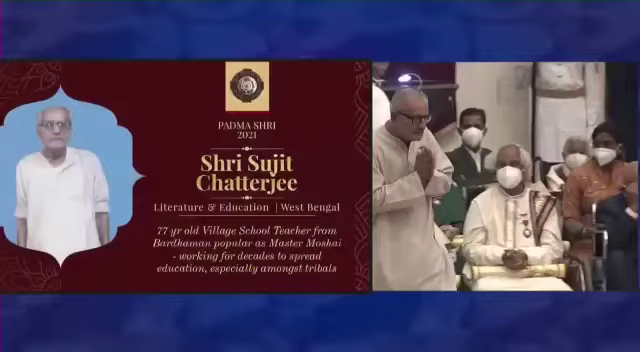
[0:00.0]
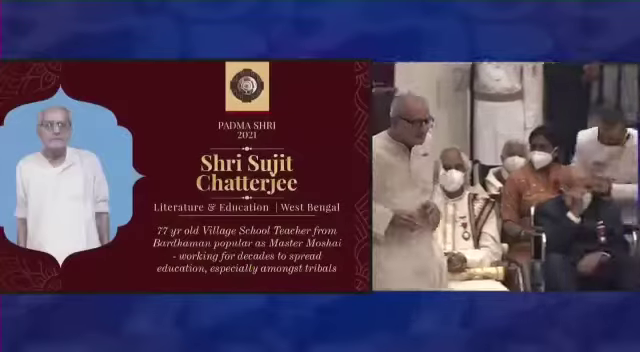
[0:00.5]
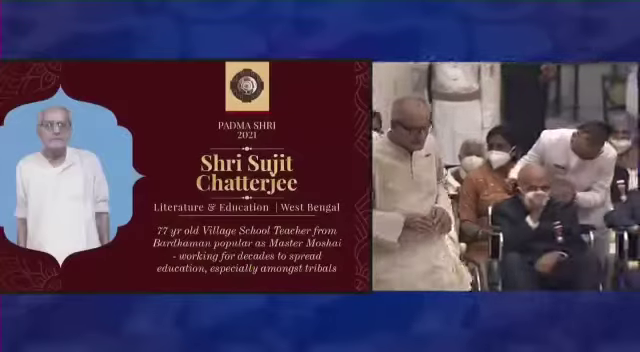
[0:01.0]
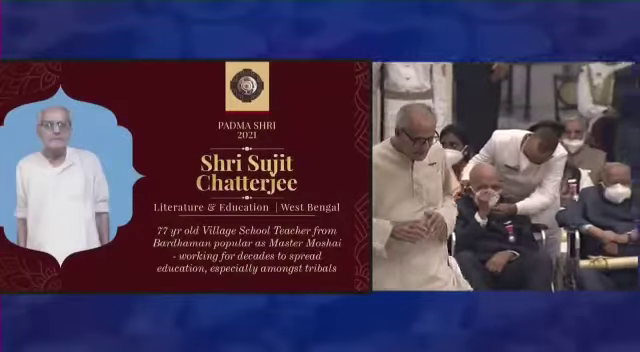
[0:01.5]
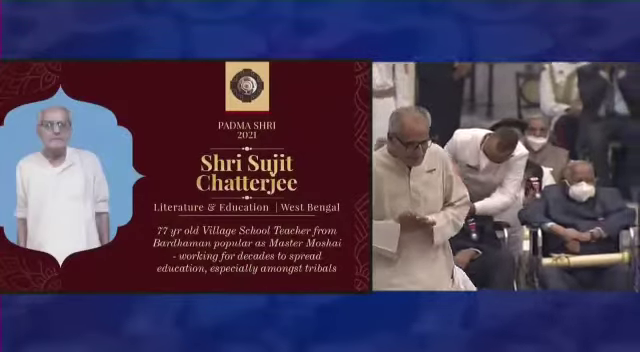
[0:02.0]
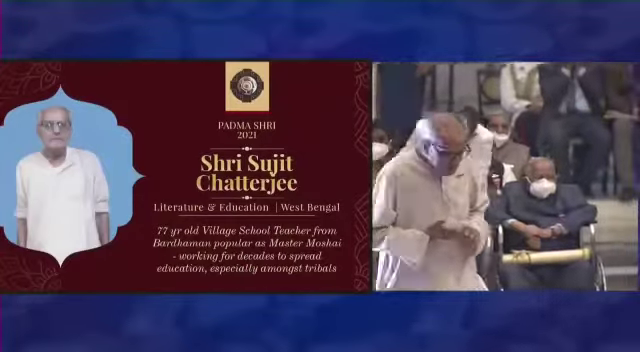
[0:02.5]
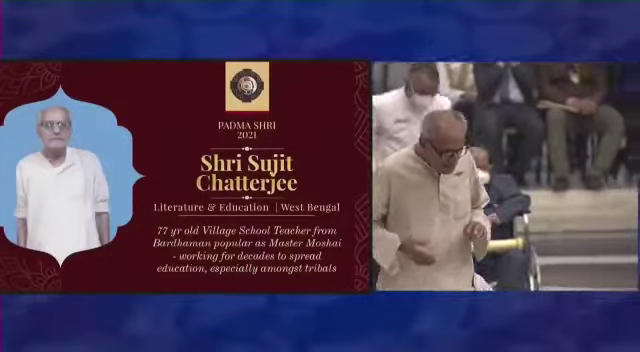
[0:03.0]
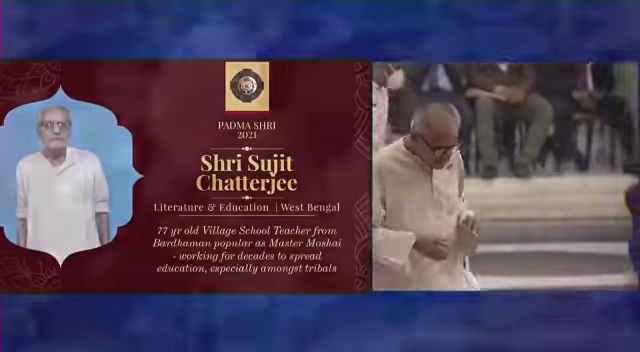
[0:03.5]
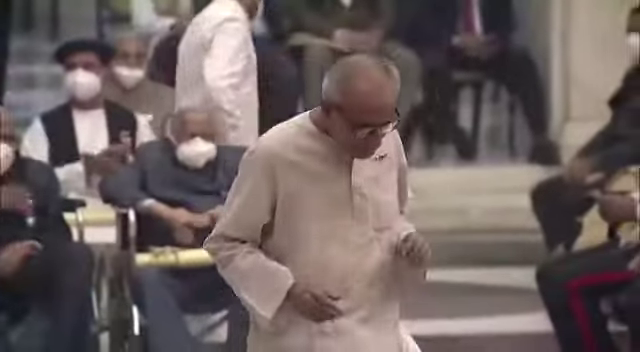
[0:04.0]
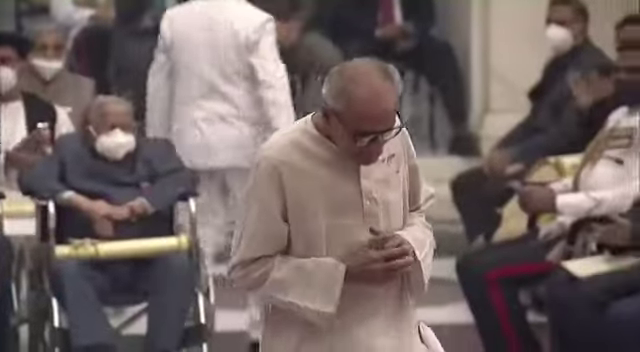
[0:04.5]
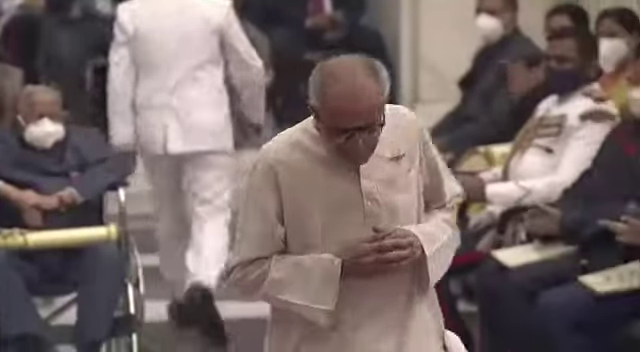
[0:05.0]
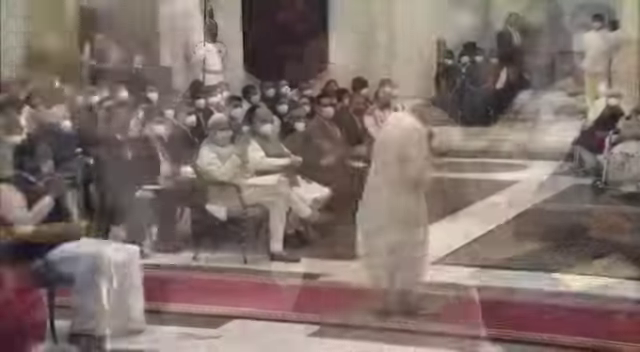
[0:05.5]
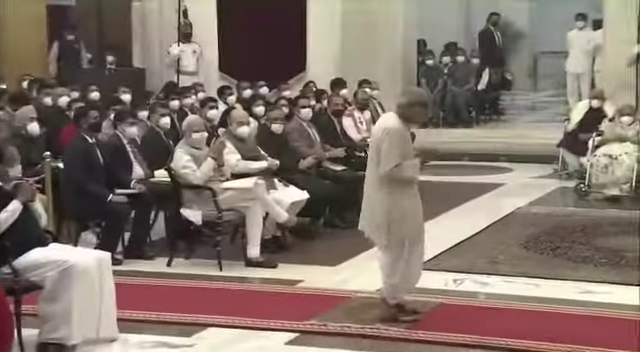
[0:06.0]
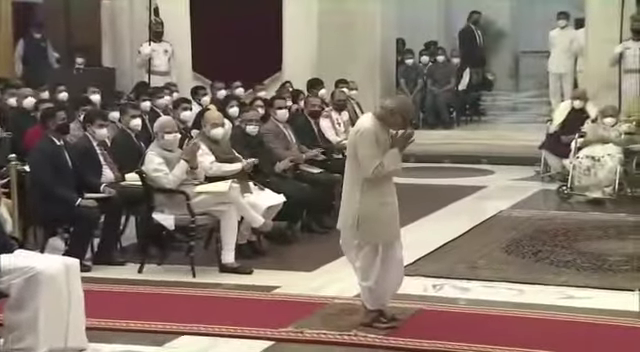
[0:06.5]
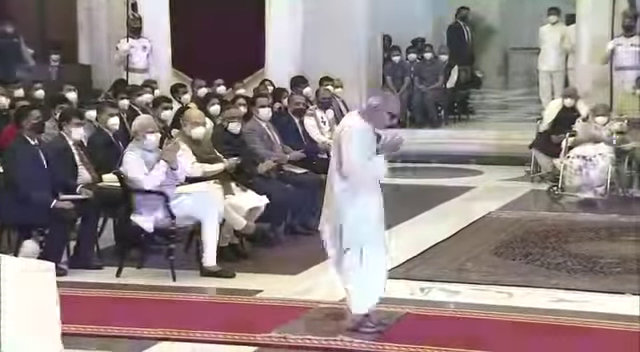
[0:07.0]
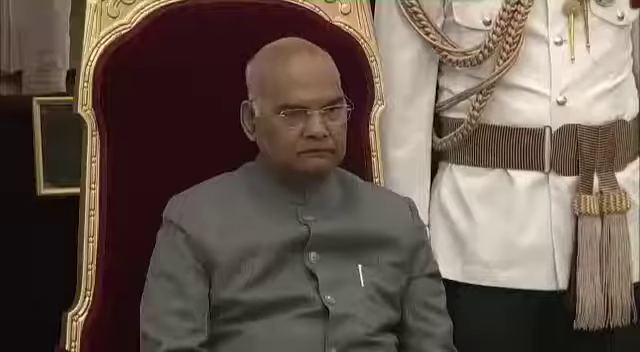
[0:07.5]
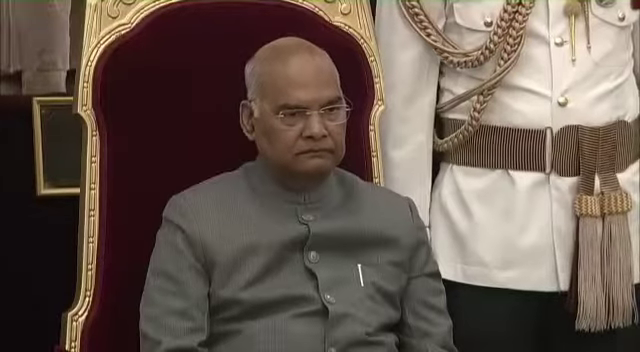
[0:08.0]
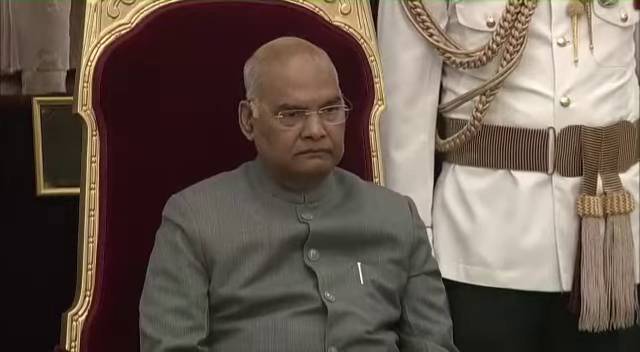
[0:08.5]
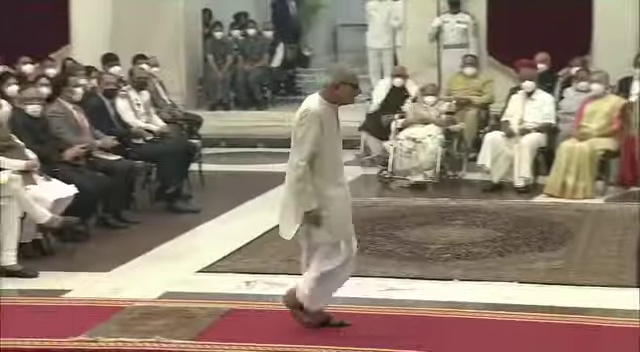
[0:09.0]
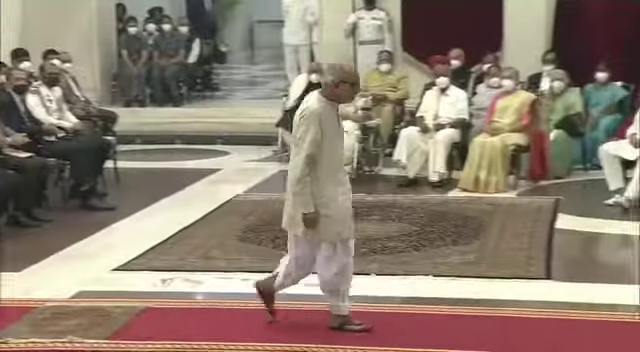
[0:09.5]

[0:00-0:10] A large gathering celebrates a 77-year-old village schoolteacher known as Master MoShai. On the left side of the frame is a picture of the schoolteacher, and on the right side is a video of him walking into a ceremony. Most of the guests at the ceremony appear to be wearing face masks.